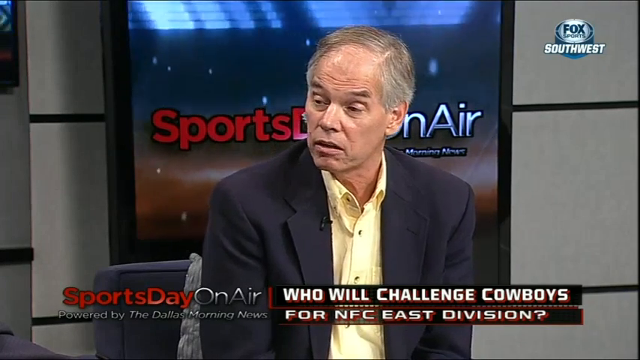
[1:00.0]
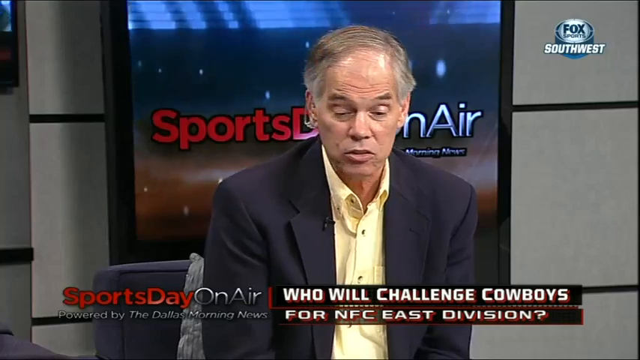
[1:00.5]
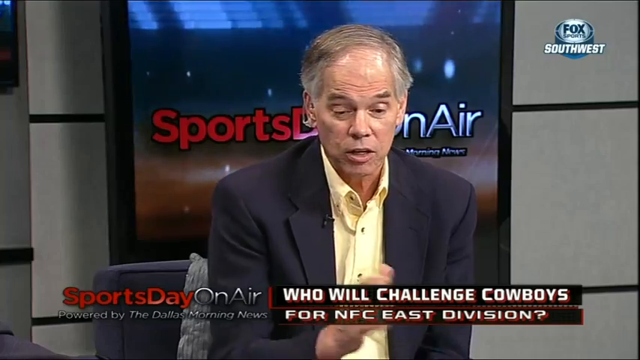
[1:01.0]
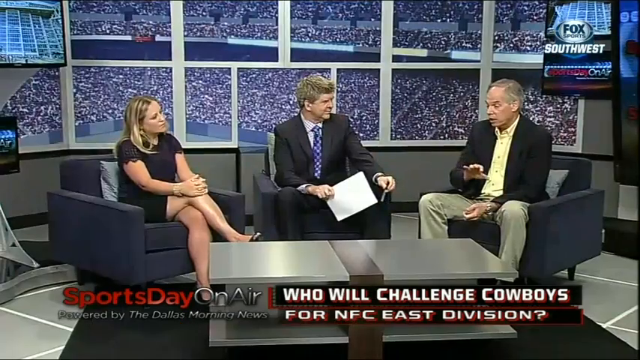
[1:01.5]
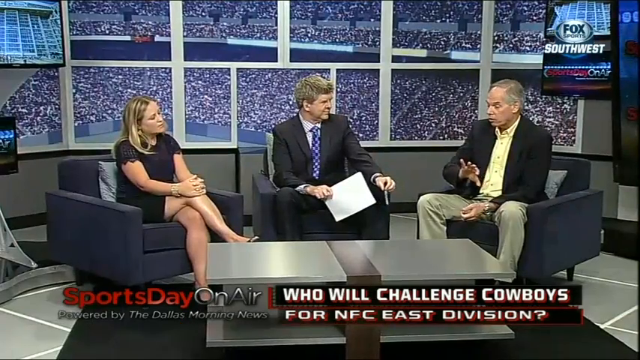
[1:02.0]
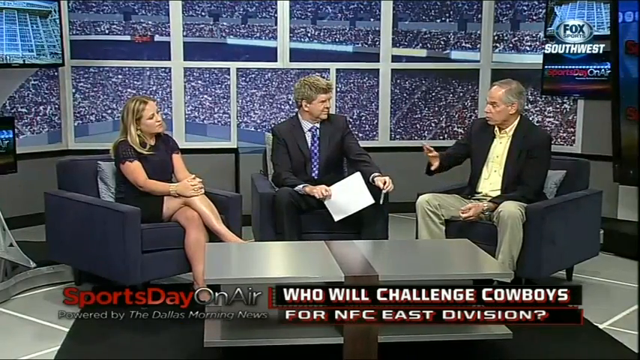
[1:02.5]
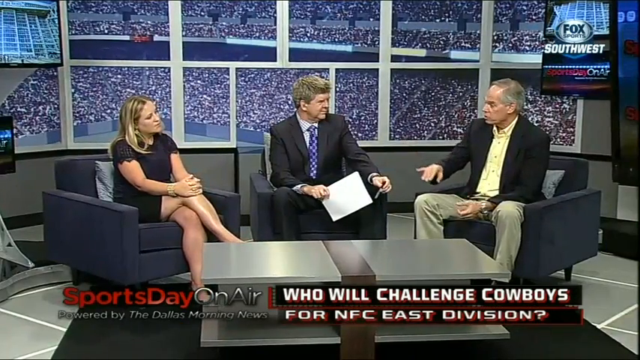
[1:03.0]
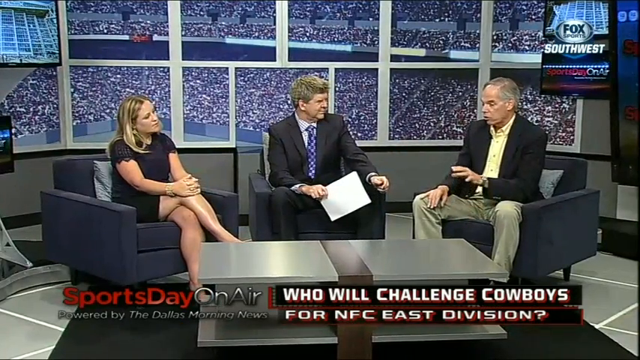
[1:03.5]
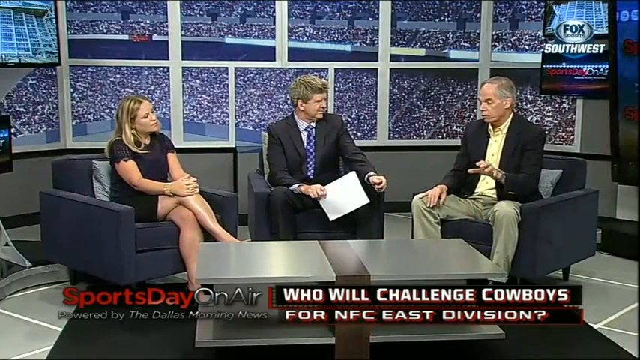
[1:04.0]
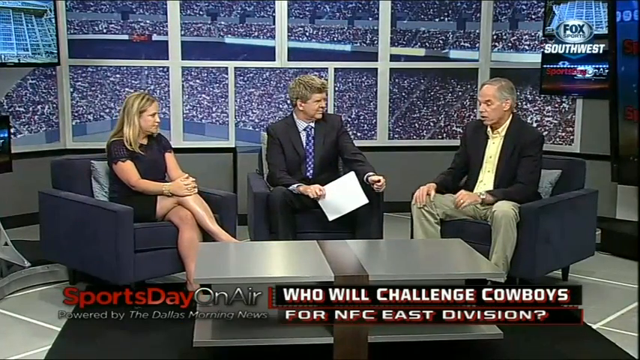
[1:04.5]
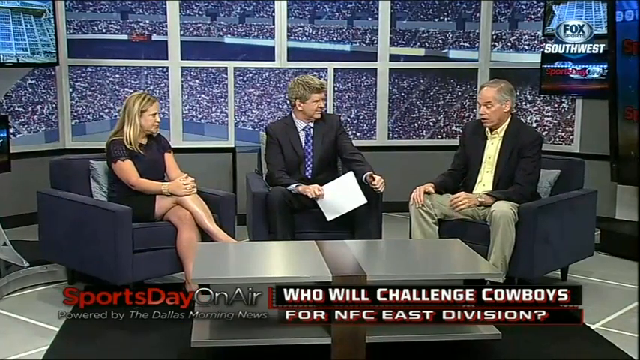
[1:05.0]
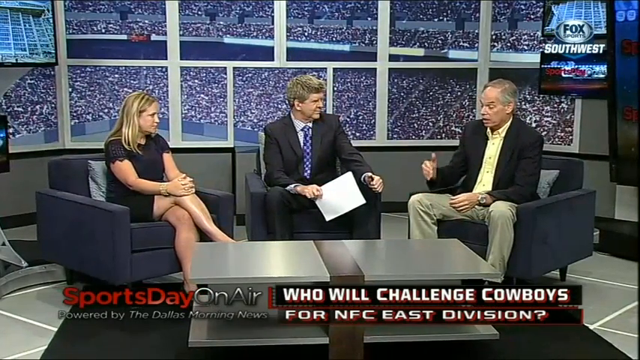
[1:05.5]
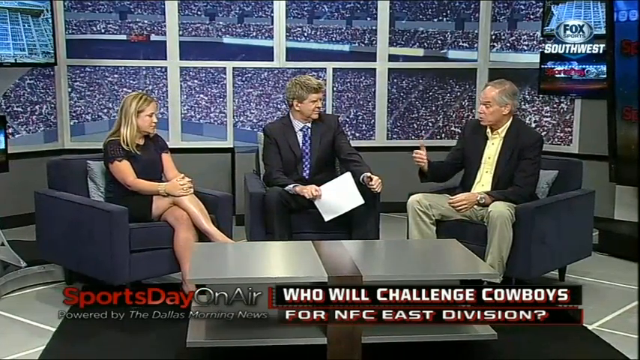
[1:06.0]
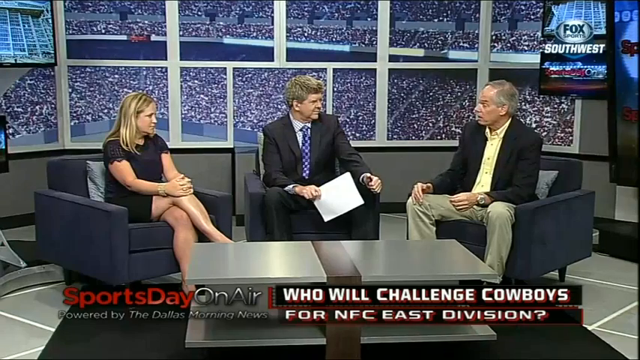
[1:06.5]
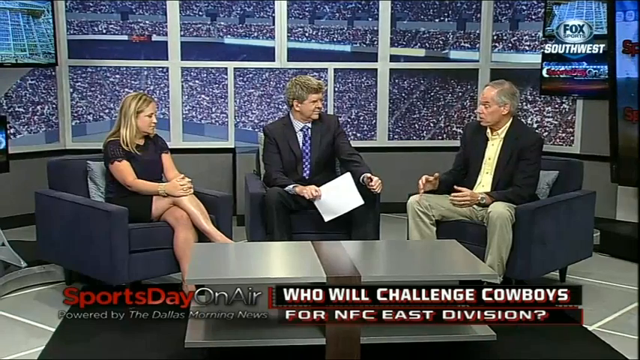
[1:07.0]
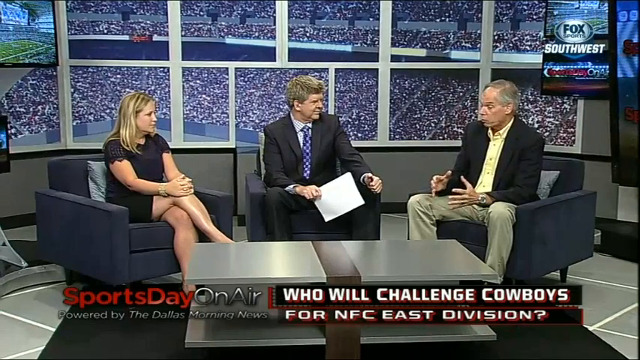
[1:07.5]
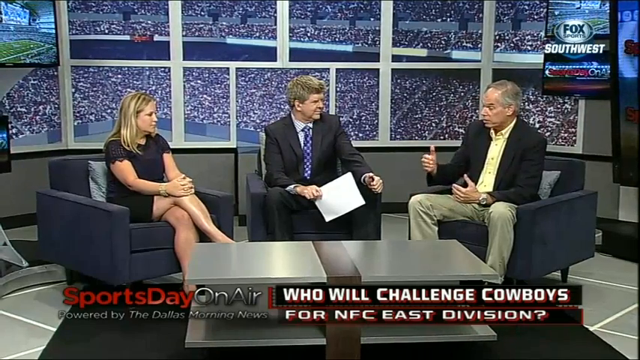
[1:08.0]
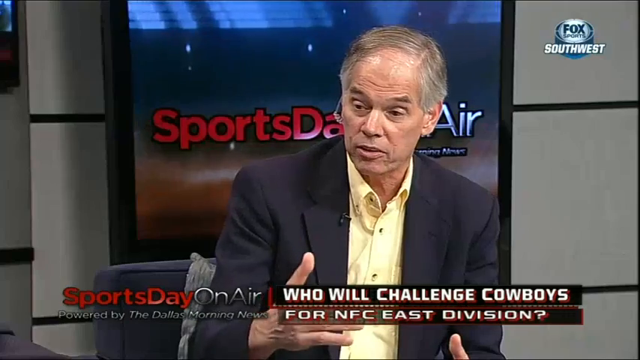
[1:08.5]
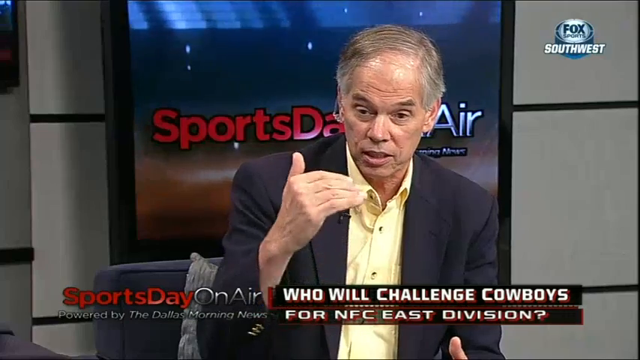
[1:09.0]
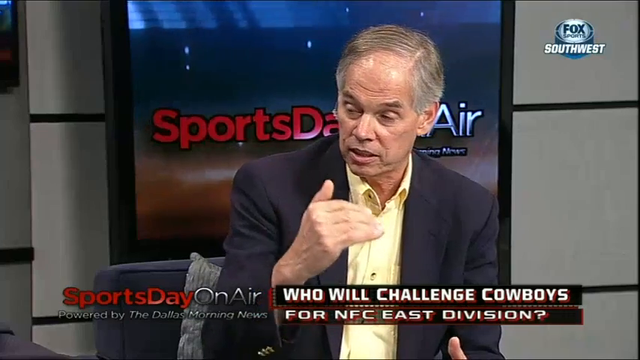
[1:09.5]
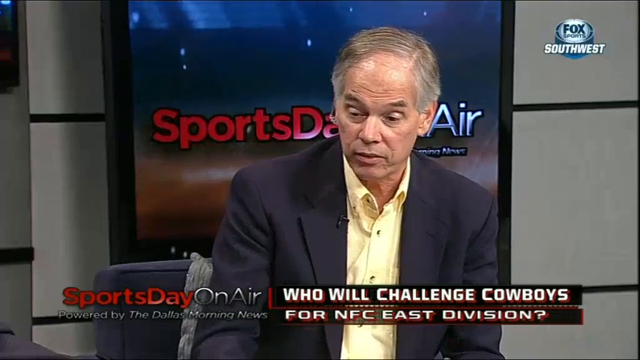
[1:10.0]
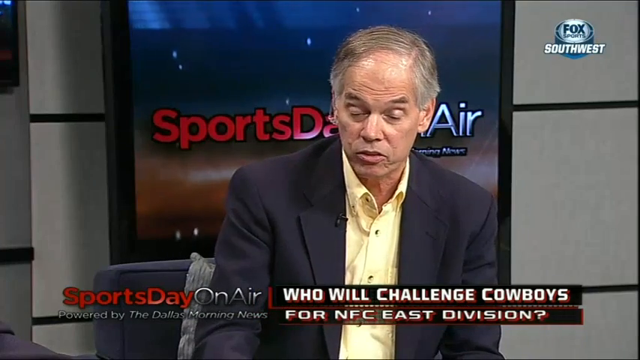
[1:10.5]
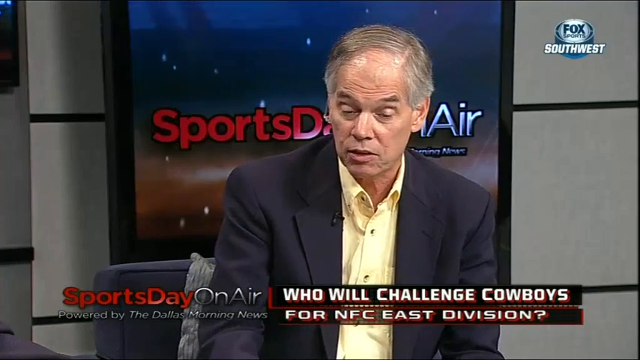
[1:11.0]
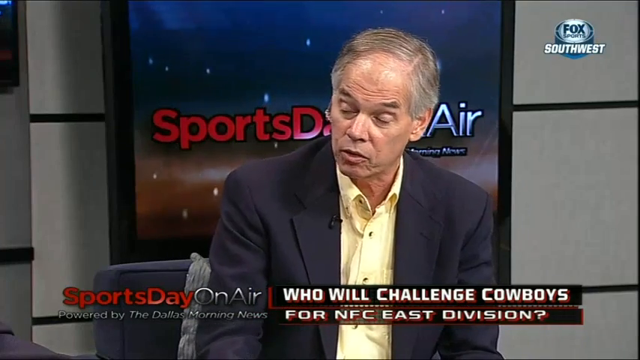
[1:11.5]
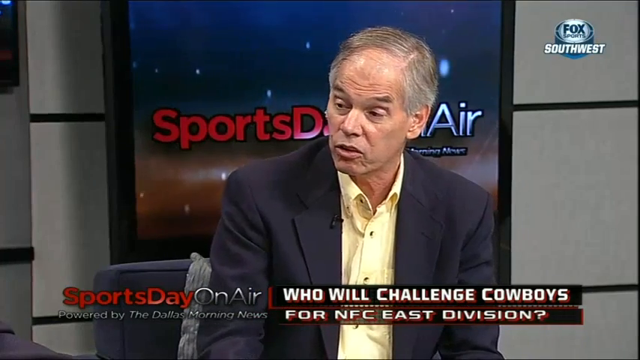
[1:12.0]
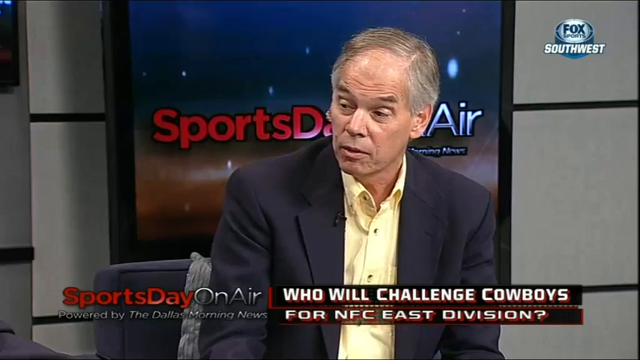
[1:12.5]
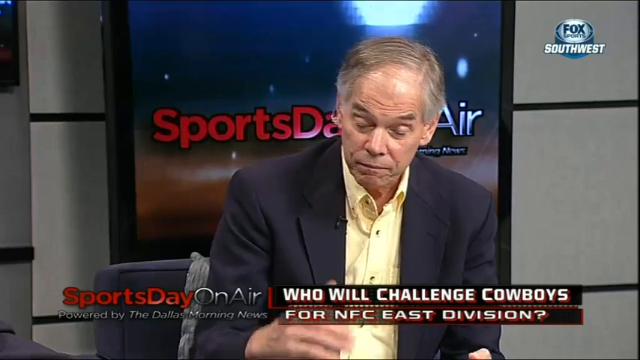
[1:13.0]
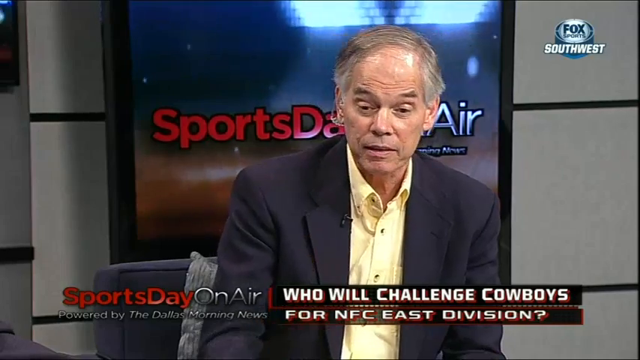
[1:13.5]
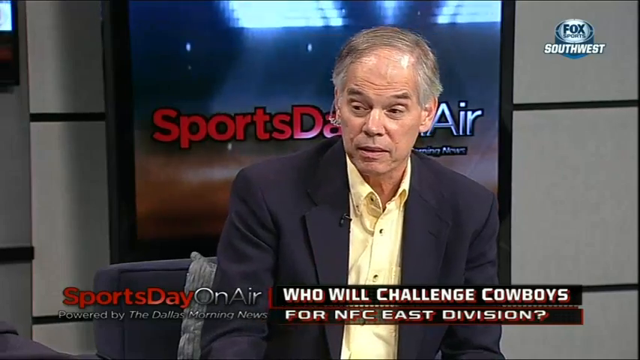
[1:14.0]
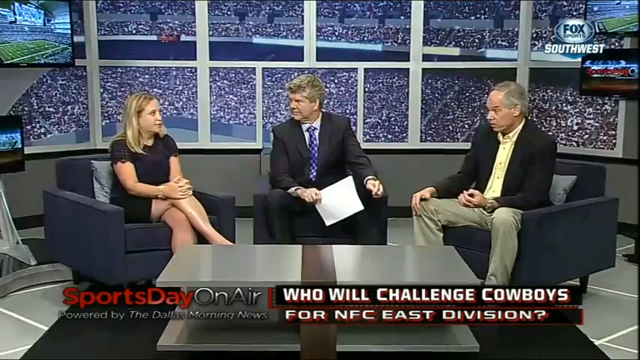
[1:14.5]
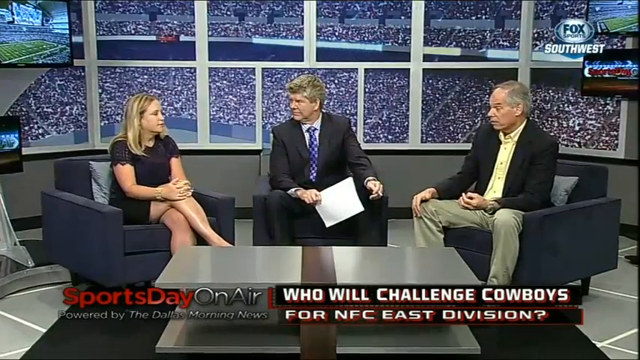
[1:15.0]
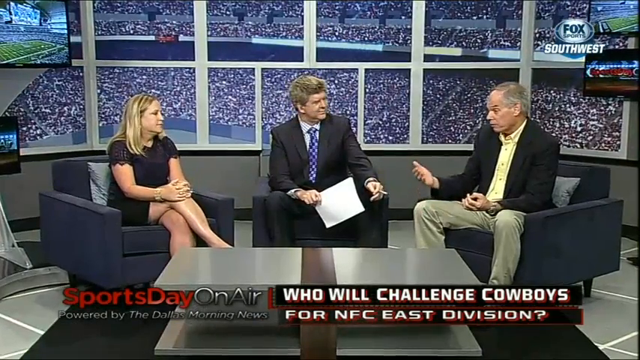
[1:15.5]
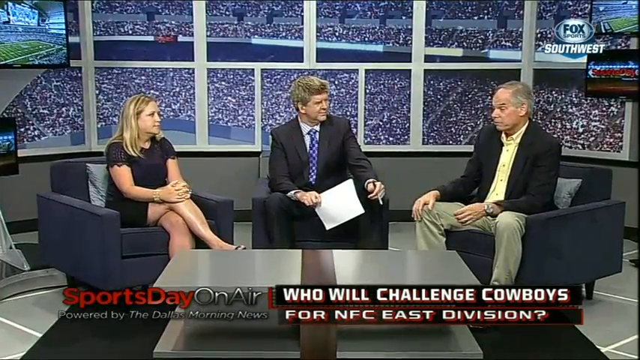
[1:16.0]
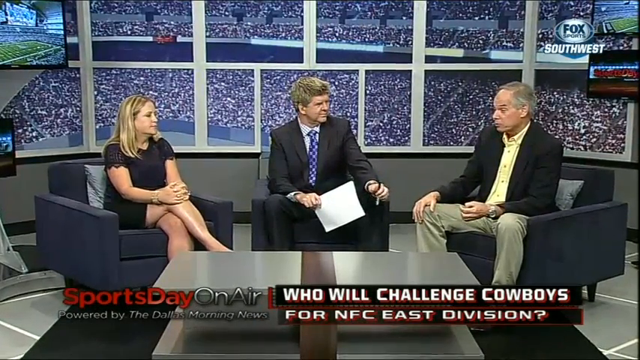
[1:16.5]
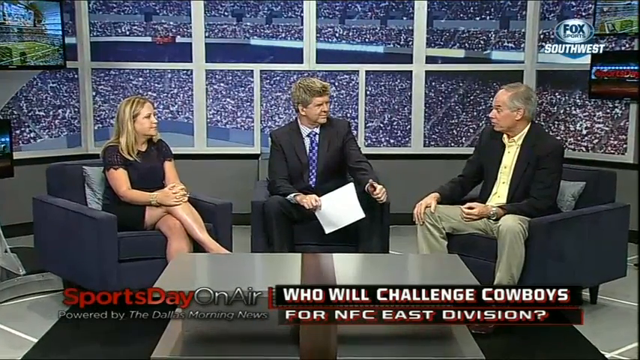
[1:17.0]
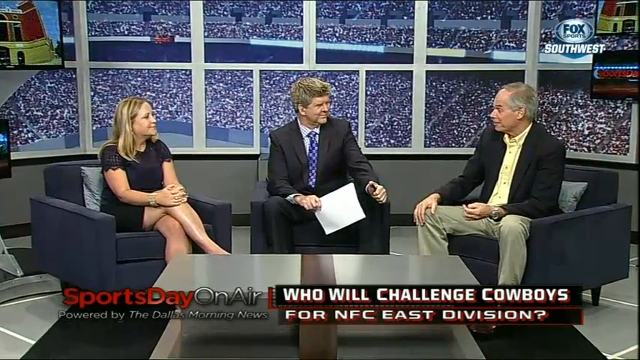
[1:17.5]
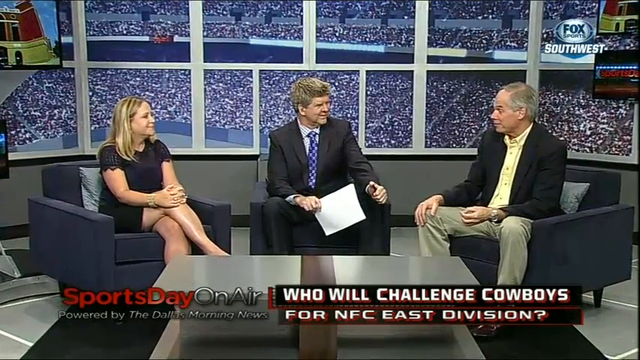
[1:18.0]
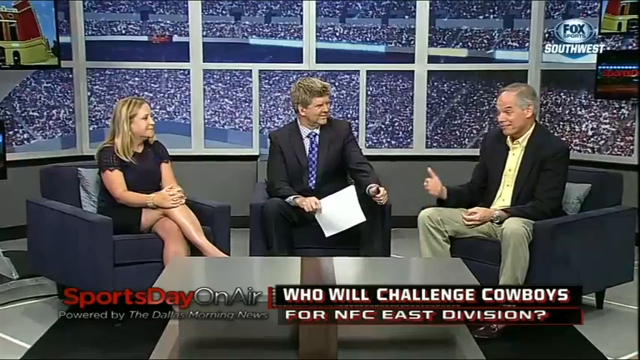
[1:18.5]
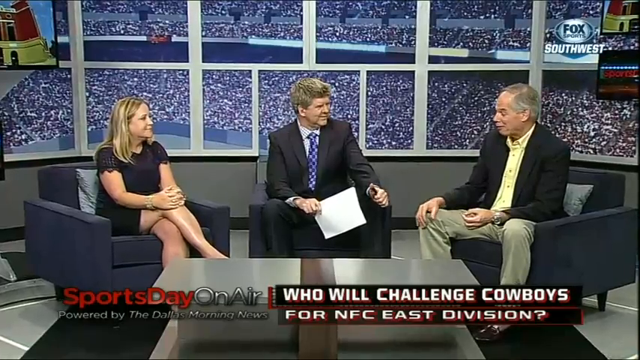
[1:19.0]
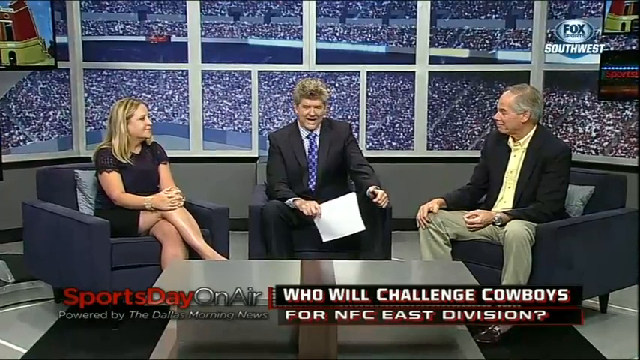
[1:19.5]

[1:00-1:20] The man in yellow is talking, and the shot zooms out. He moves his left hand in a motion away from him, and his right hand also moves up, curling a bit. His eyebrows are angled sharply downward. The woman and the man in the middle listen and reply a little. He lifts his right hand and sort of moves it away, then his left hand makes the same lifting-and-moving-away motion, then his right hand moves up and down, as if he is making a list and sort of addressing each item. He has a light smile, wrinkles in his forehead, and wrinkles around his nose and on his neck. He is a white male who looks like he might be in his late 50s or early 60s.